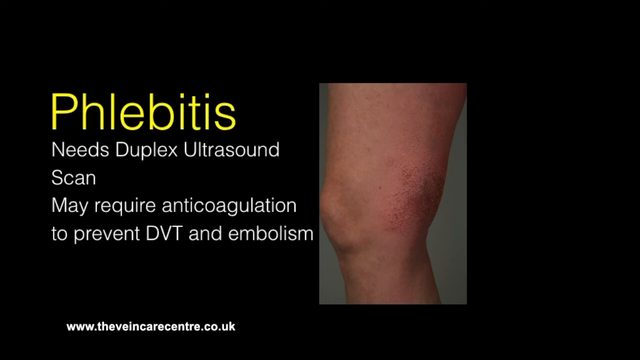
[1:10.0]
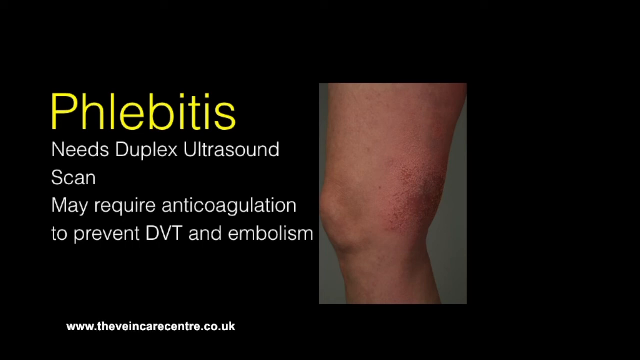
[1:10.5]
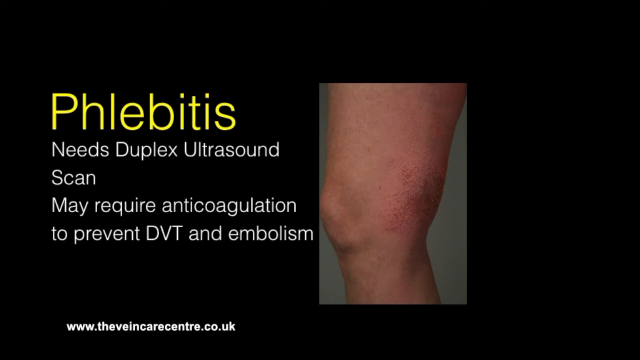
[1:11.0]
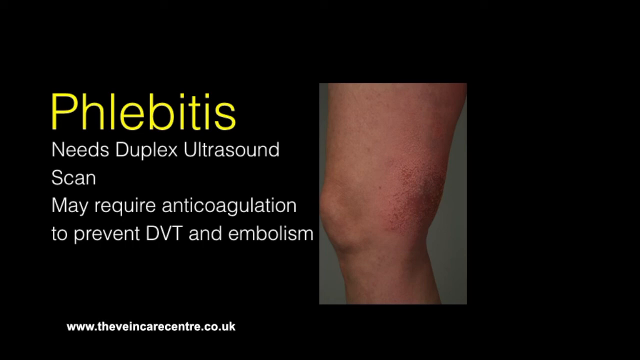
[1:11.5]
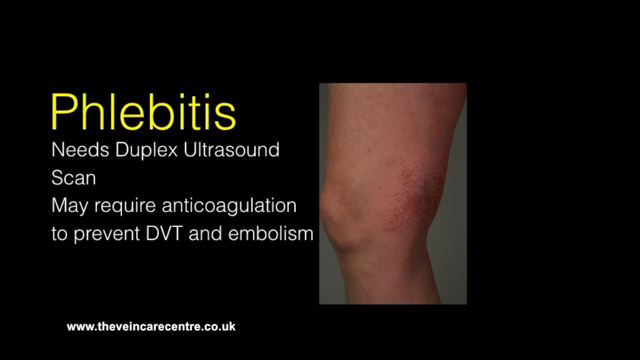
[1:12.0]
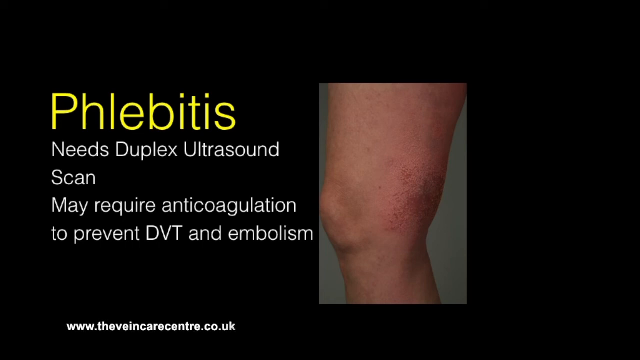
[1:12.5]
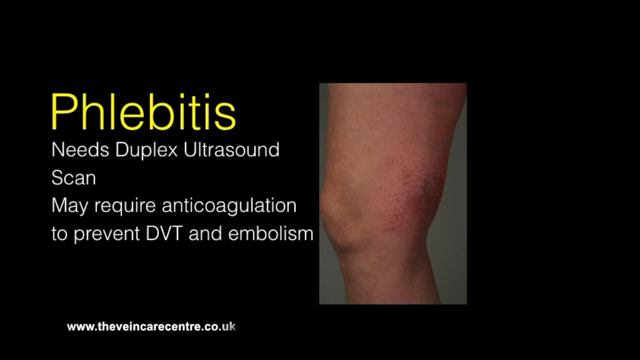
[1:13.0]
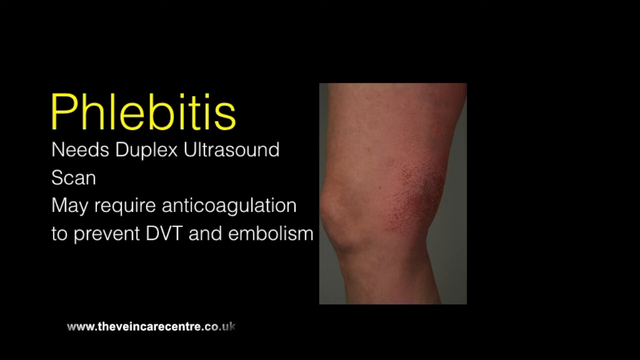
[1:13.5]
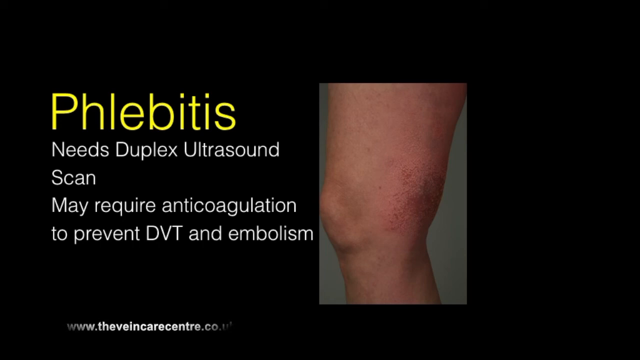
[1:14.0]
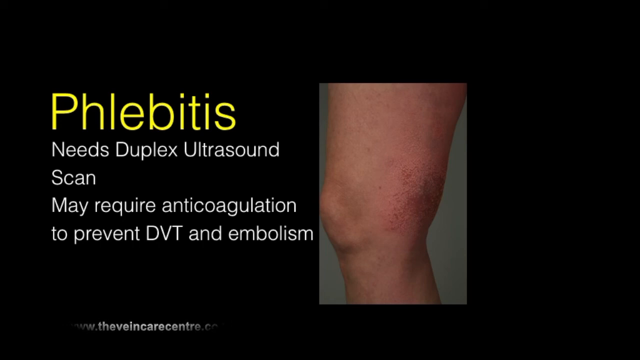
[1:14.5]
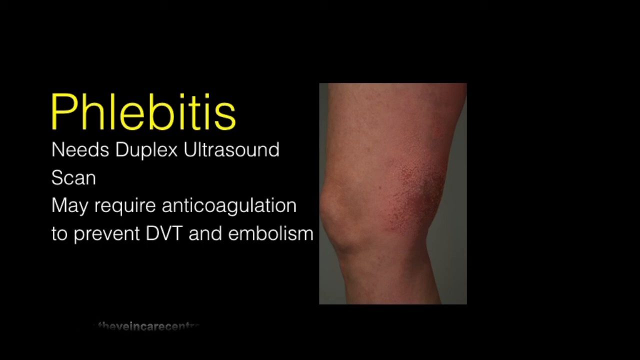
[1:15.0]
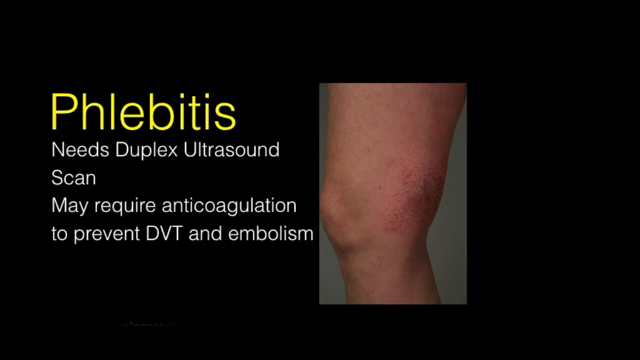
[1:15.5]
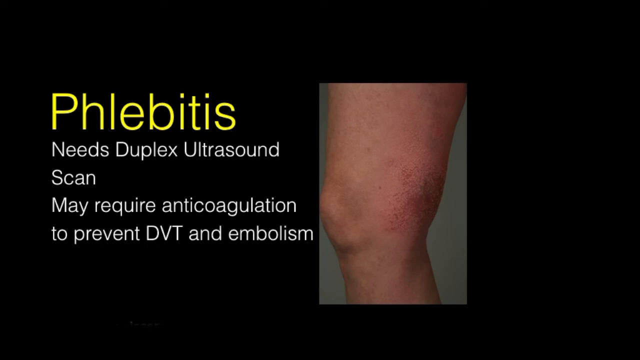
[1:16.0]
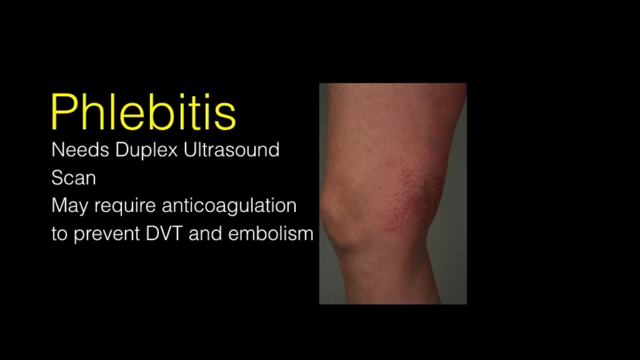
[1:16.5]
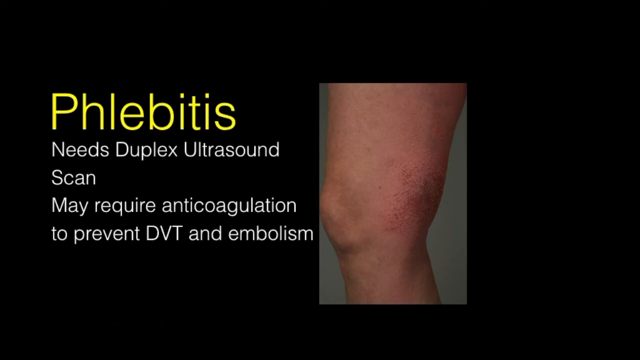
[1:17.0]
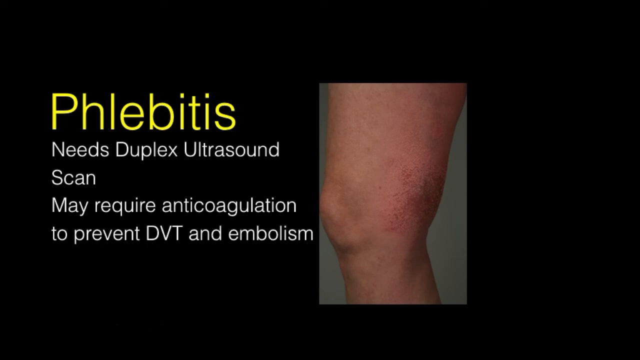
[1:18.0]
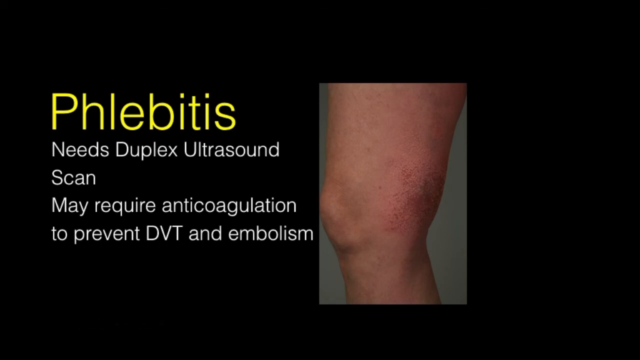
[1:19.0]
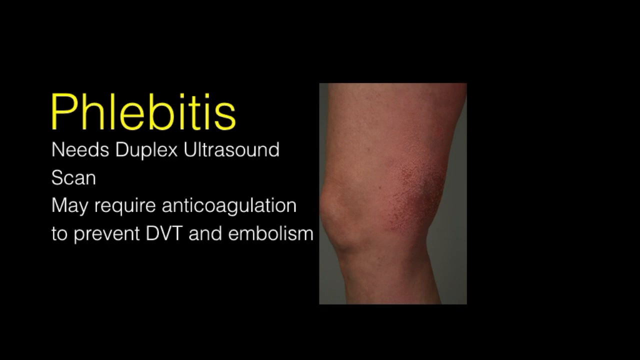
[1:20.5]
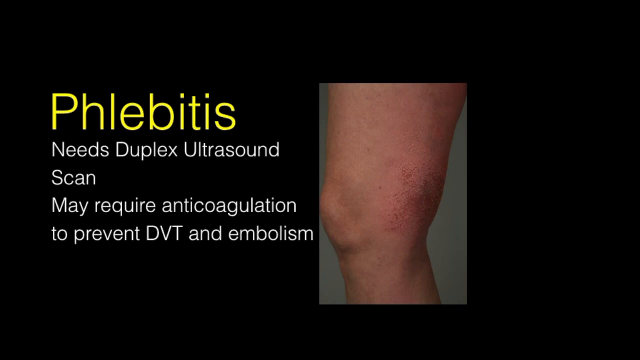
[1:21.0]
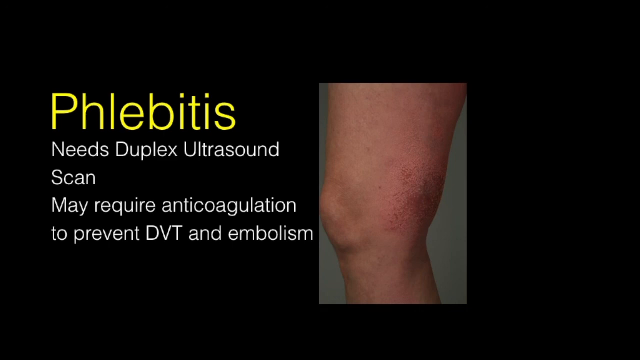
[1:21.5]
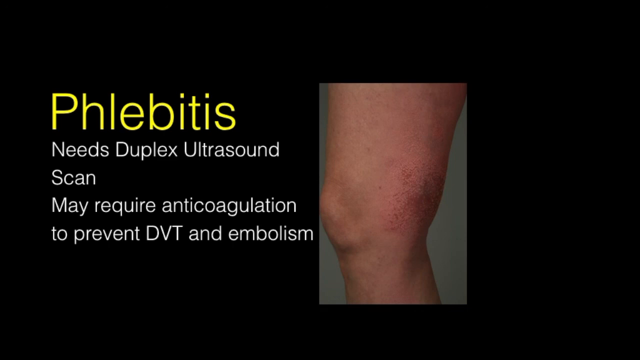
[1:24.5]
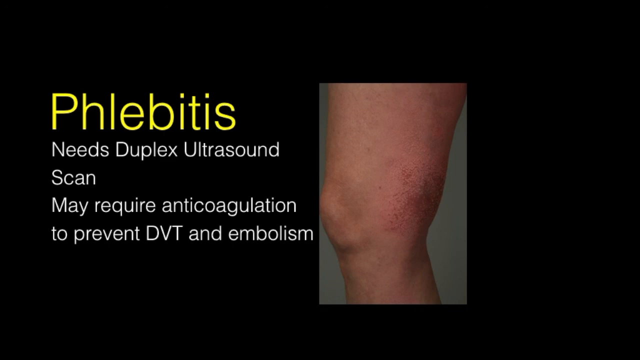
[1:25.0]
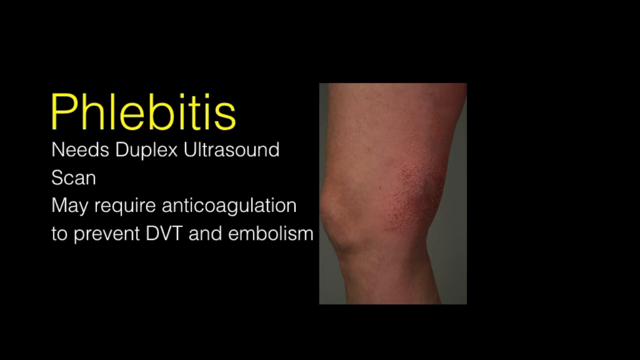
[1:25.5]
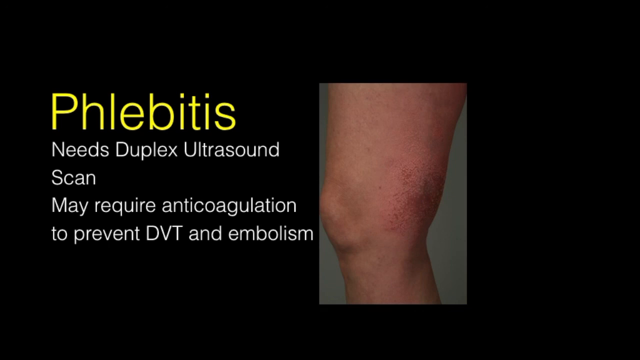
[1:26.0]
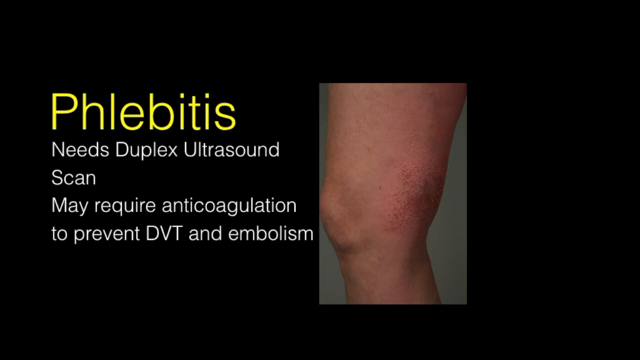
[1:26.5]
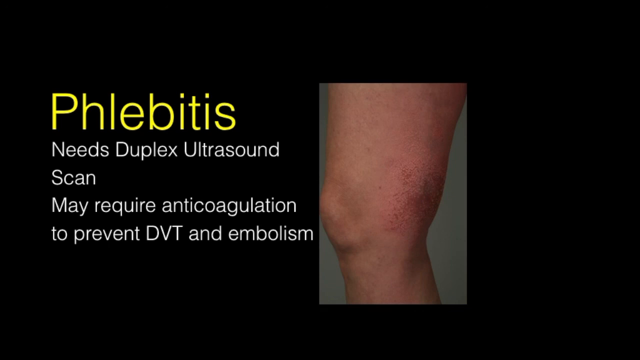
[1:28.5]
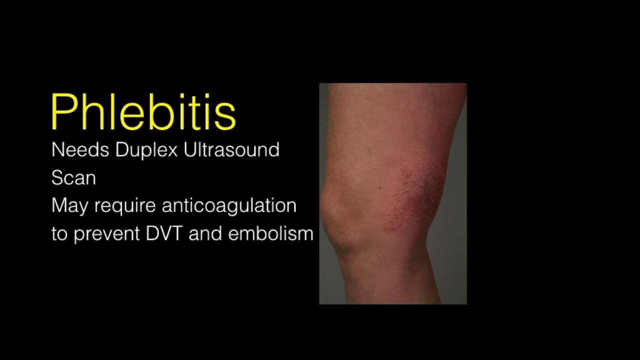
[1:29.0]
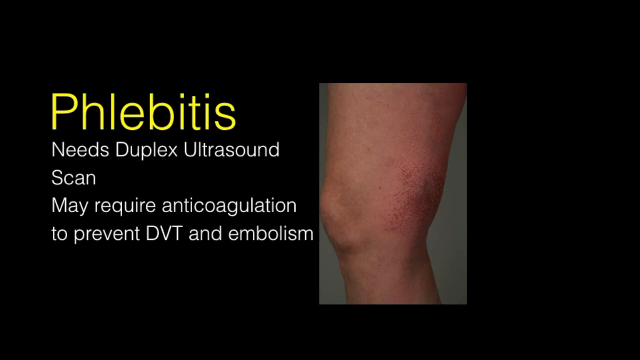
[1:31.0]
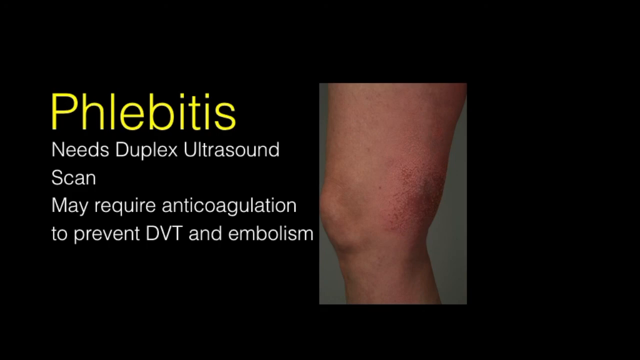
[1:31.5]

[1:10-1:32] The text "Phlebitis needs duplex ultrasound scan and may require anticoagulation to prevent DVT and embolism" is shown with a picture of somebody's knee, showing the side of the knee and behind the knee. There is a close-up picture of a knee and a close-up picture of the tubular lump behind the knee. Nothing else appears; the text and the picture of the knee remain to the end.